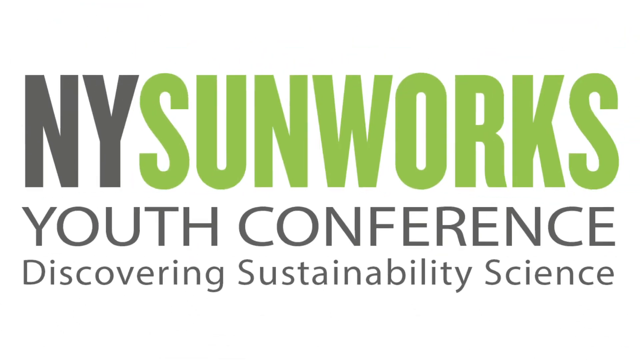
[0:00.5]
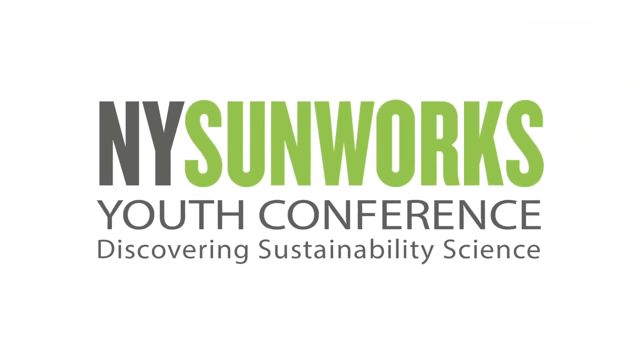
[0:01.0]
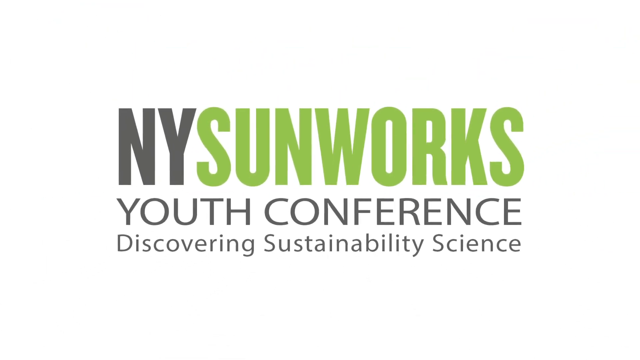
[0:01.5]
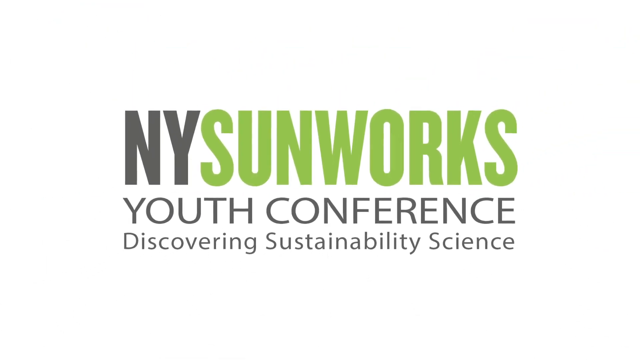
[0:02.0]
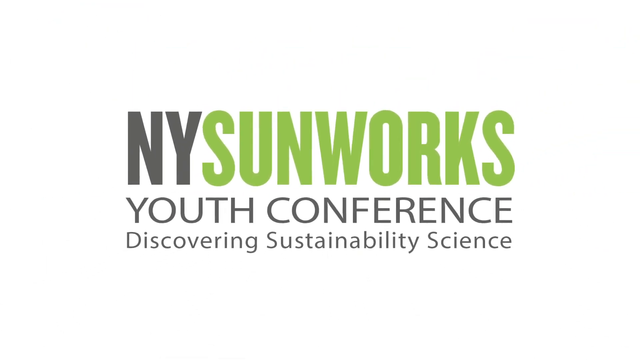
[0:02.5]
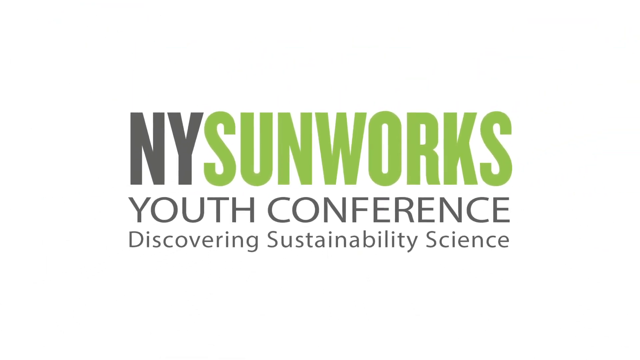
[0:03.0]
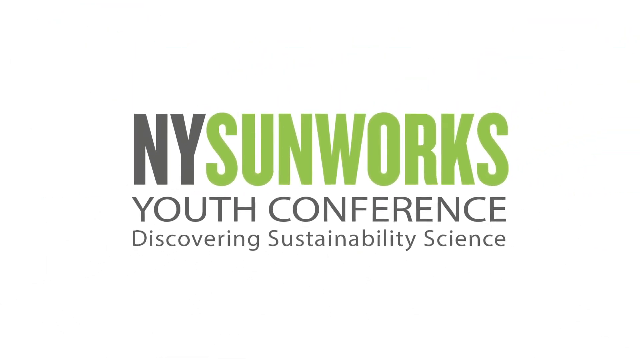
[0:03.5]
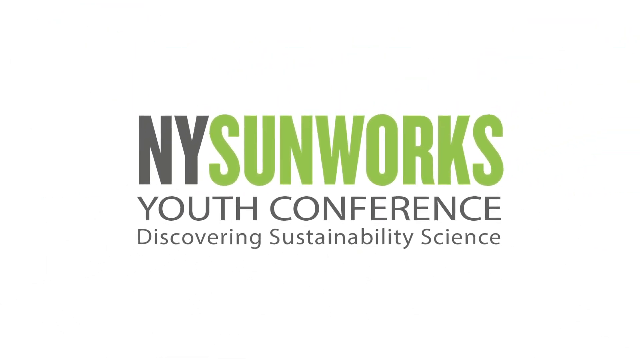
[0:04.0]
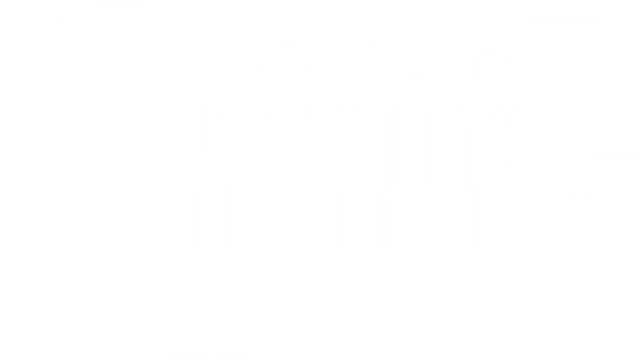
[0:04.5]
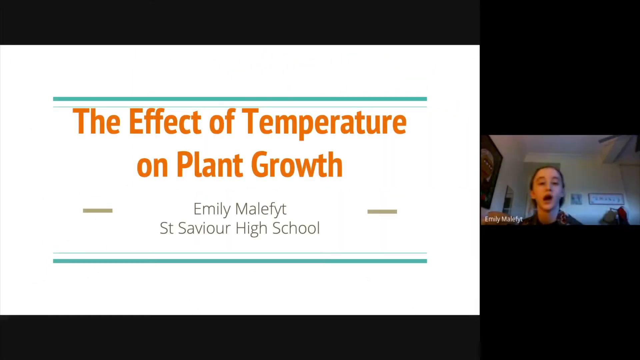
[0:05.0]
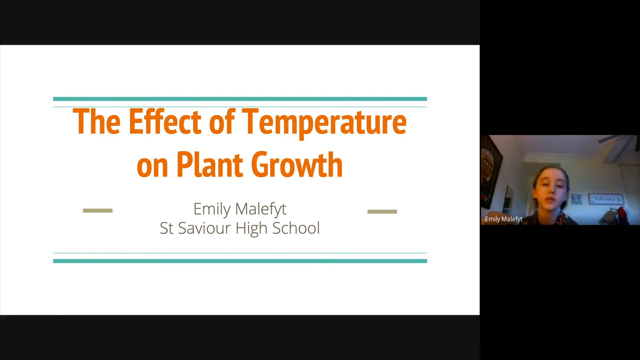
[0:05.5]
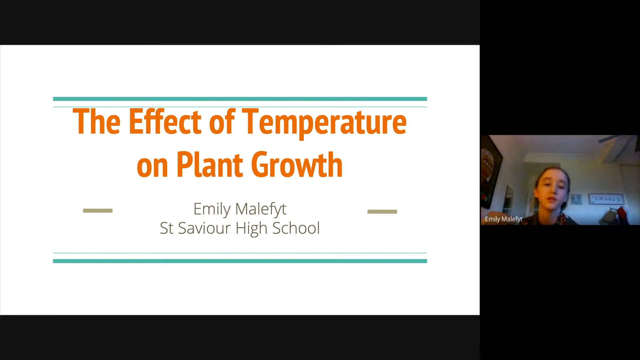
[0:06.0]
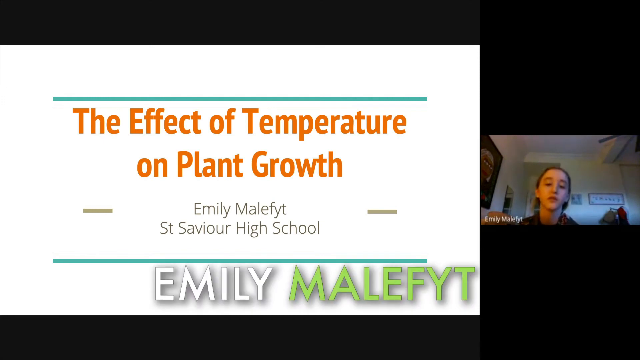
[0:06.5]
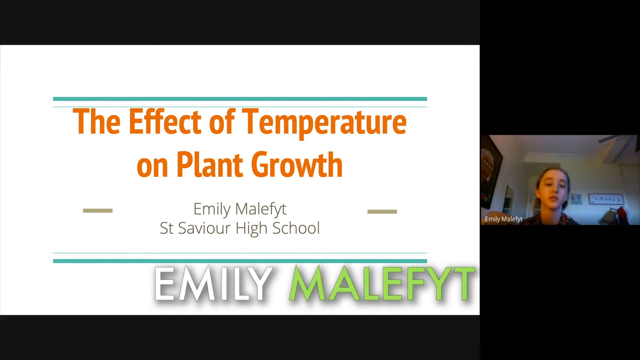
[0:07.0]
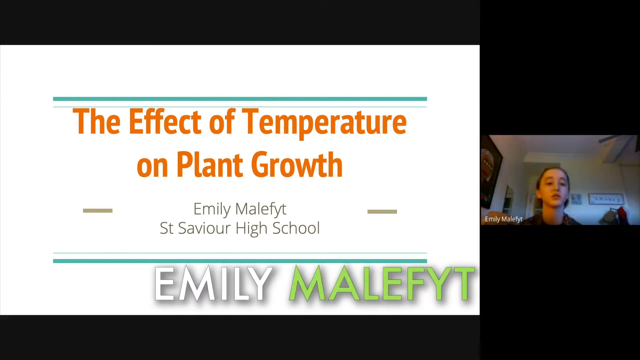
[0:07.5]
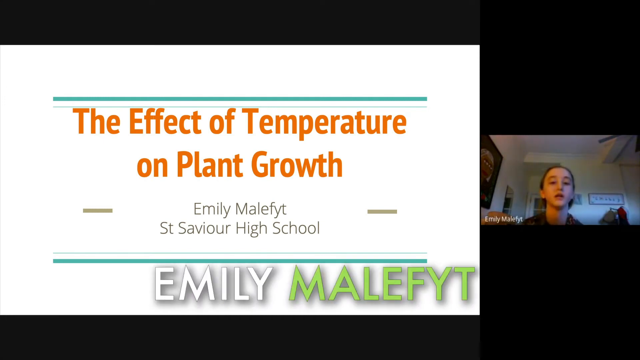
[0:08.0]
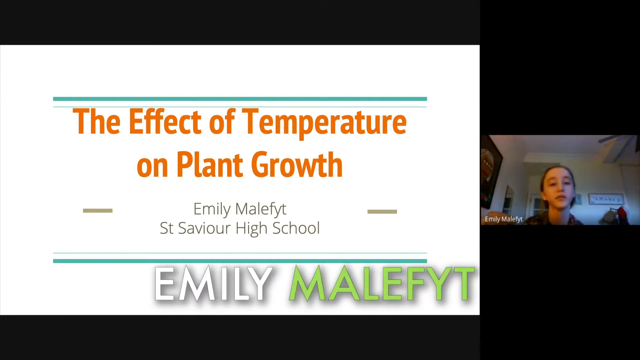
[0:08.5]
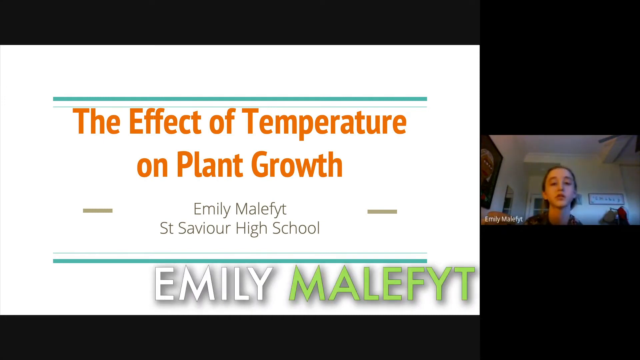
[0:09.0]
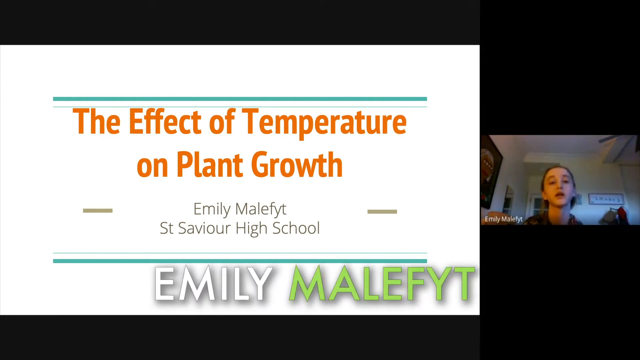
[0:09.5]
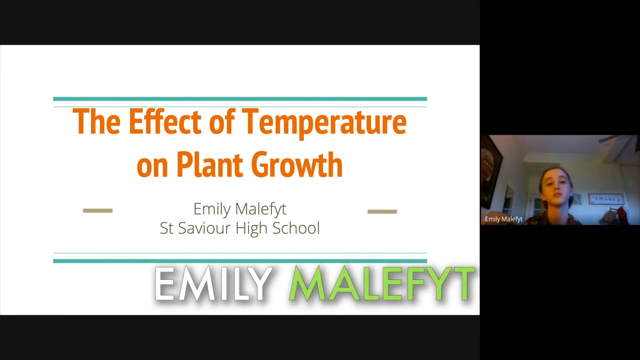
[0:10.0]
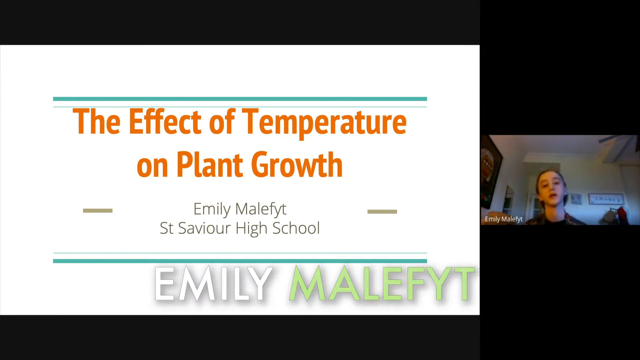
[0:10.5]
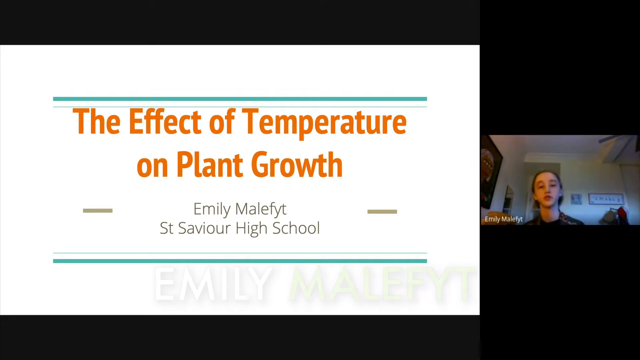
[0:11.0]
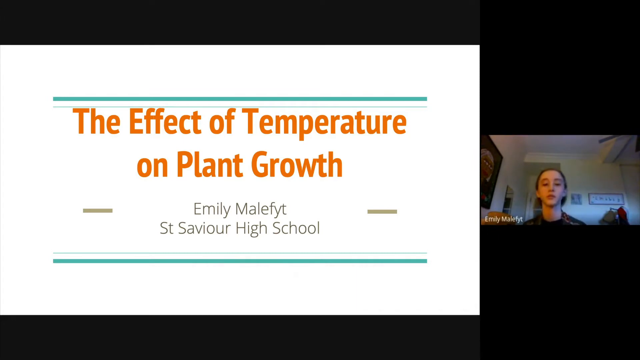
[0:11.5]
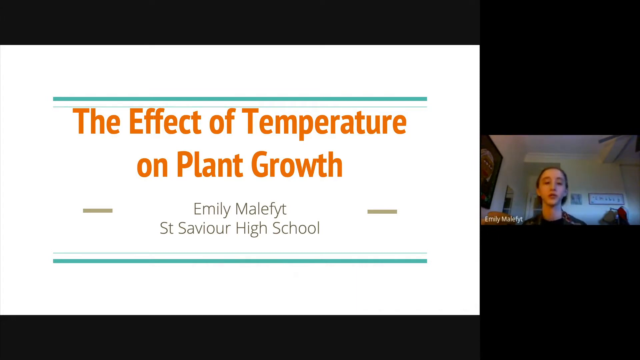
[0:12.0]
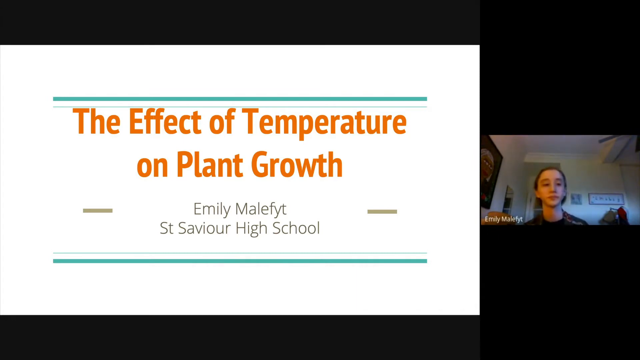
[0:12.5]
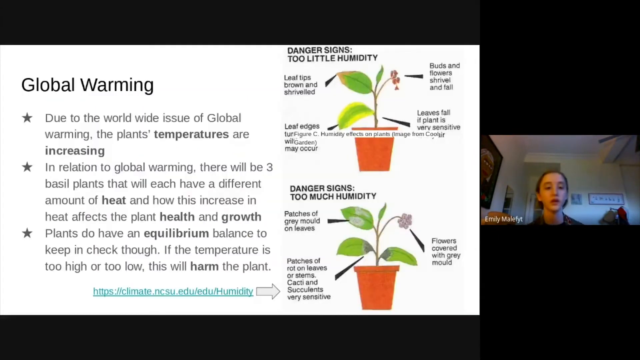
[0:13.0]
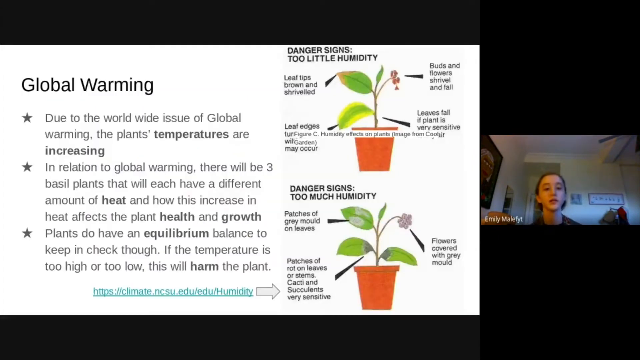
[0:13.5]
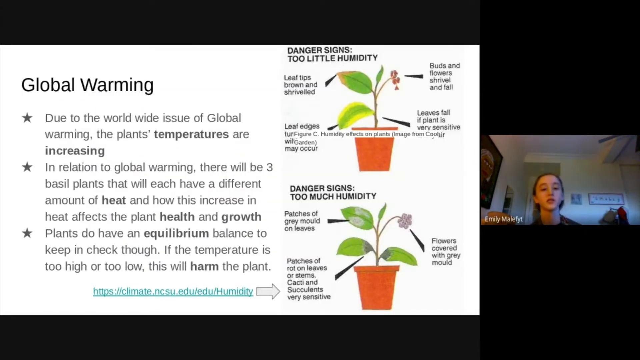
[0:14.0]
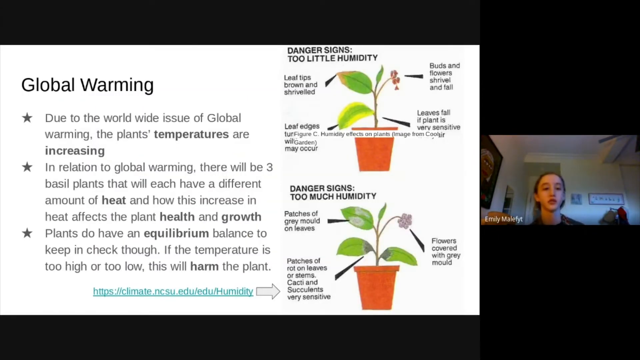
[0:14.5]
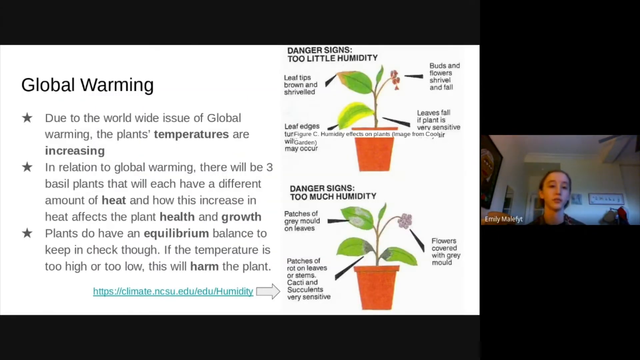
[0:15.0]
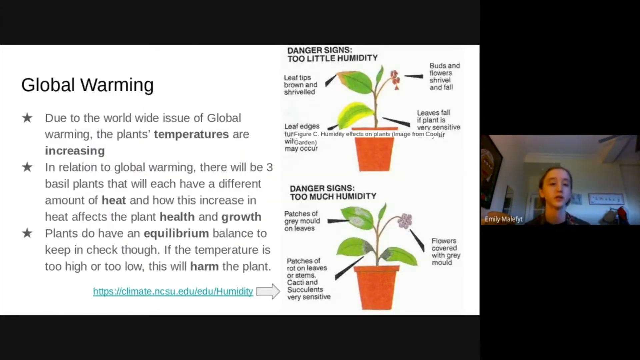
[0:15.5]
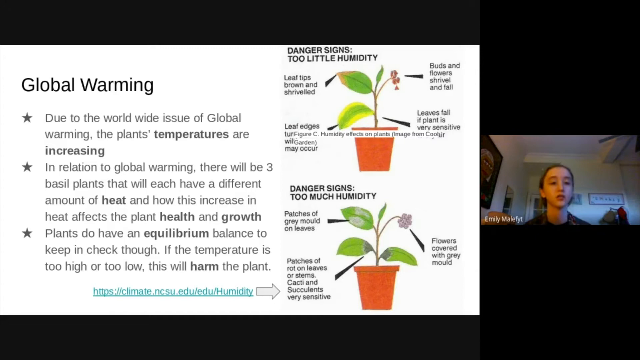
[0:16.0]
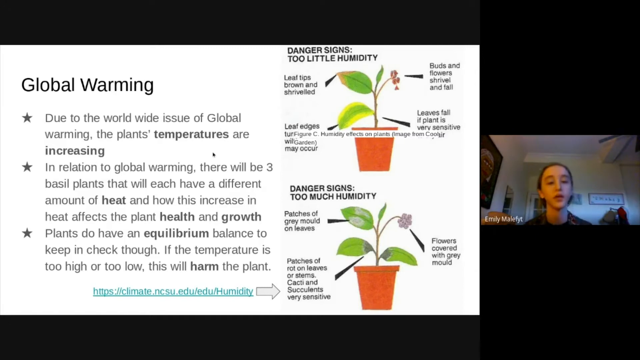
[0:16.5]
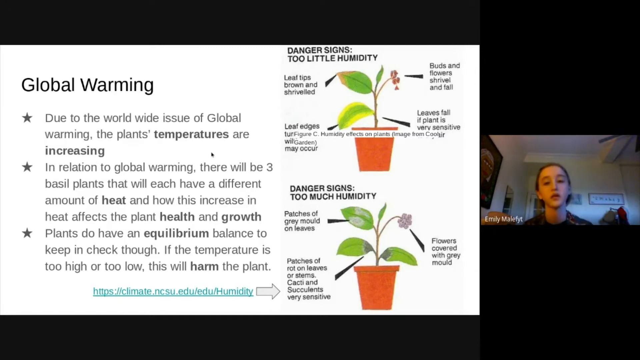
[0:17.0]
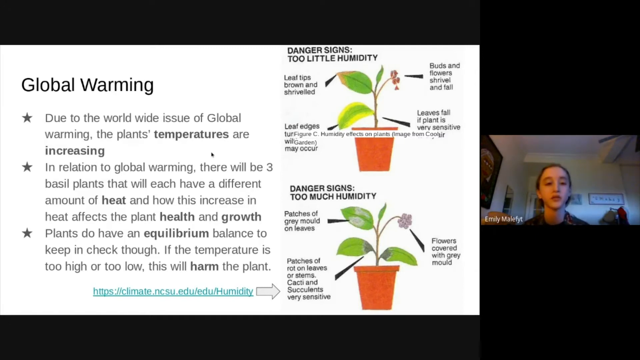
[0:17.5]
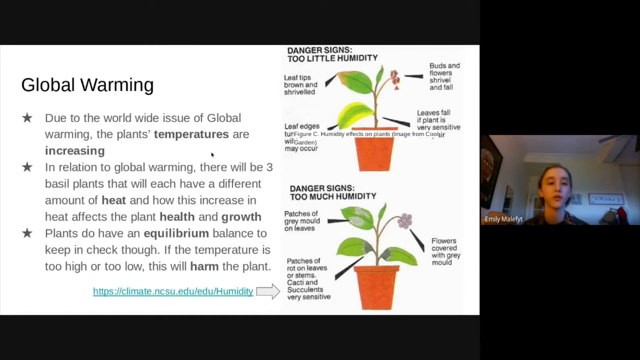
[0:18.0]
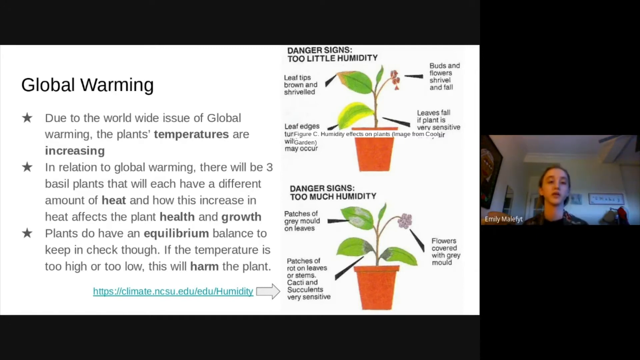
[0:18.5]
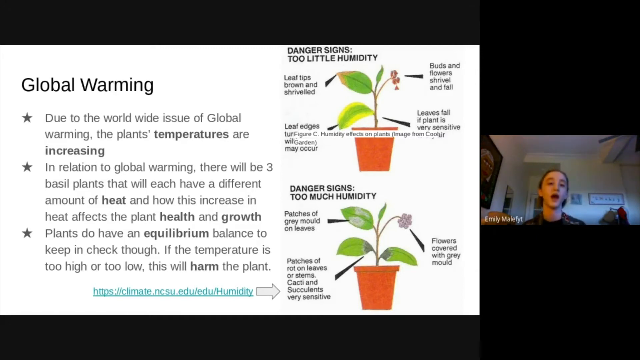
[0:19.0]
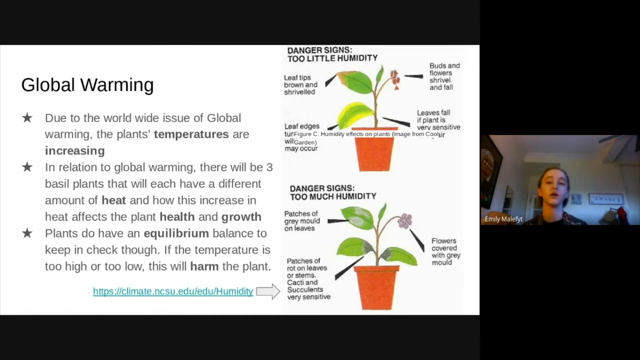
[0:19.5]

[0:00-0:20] The video opens on a white screen with text coming into the center. Bold text reads "NY Sunworks," with "Sunworks" in green font, and below it is "Youth Conference Discovering Sustainability Science." This fades away, and the next shot shows a presentation, with the slides on the left-hand side and the presenter on the right-hand side; it looks like a recording of a Zoom call that has already happened. The presentation's title reads "The Effect of Temperature on Plant Growth," presented by Emily Malefyt of St. Saviour High School. After a few seconds, her name pops up in bold text at the bottom left of the presentation, while Emily speaks in the box on the right. The next slide is about global warming, going through what it is and the issue of plants' temperatures increasing. It explains that three basal plants will have different amounts of heat and that how they increase in heat affects their health and growth, and that plants have an equilibrium balance, so a temperature that is too high or too low will harm the plant. On the right are diagrams of danger signs.